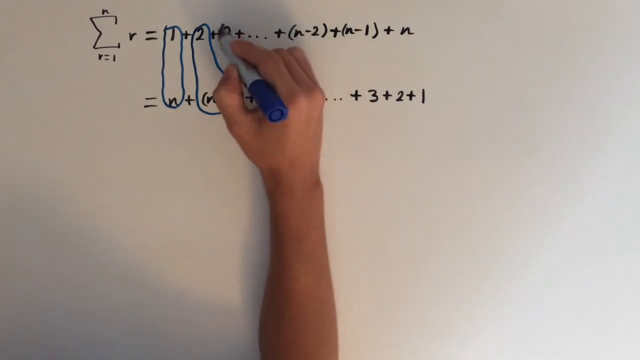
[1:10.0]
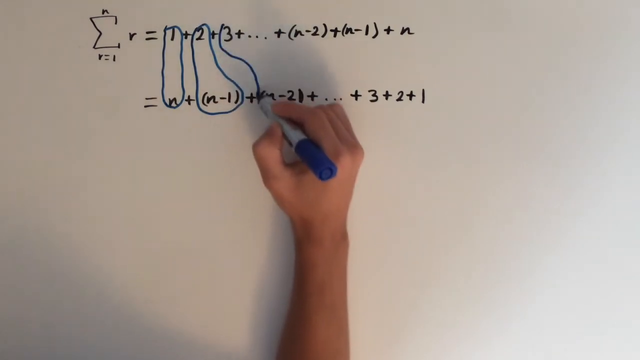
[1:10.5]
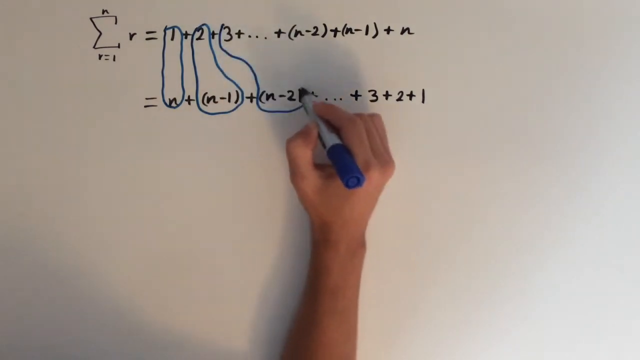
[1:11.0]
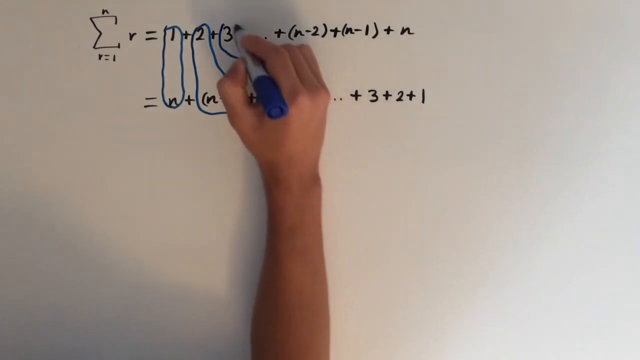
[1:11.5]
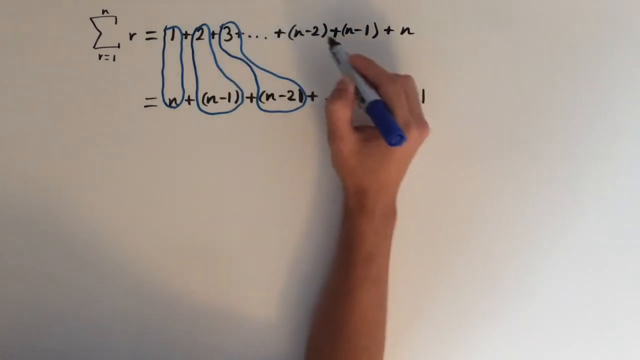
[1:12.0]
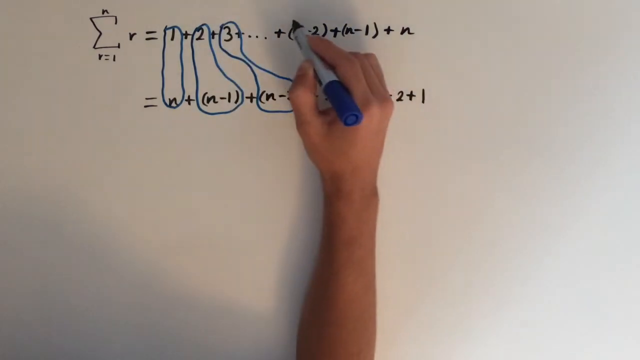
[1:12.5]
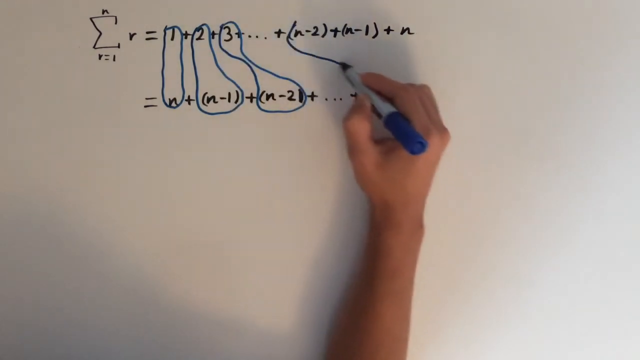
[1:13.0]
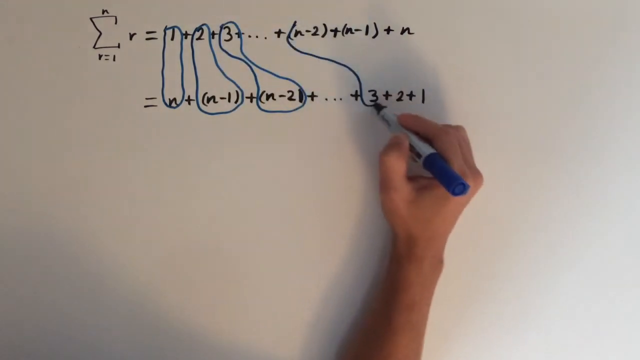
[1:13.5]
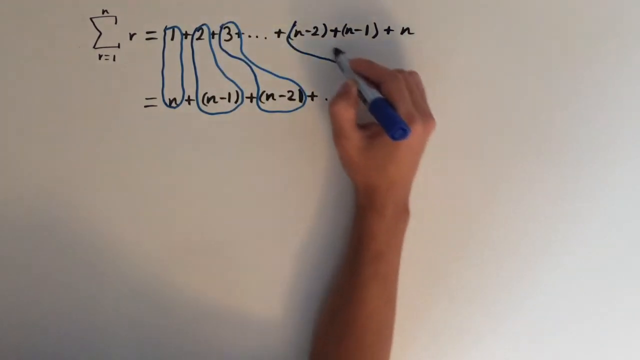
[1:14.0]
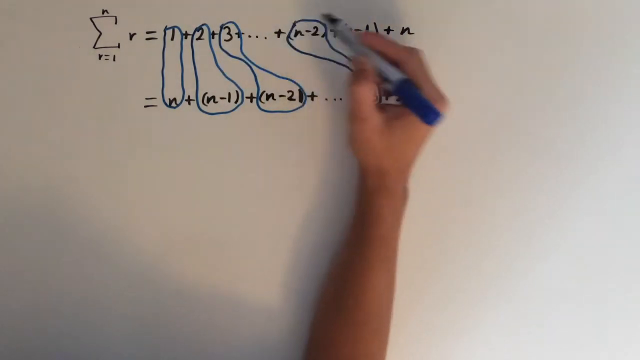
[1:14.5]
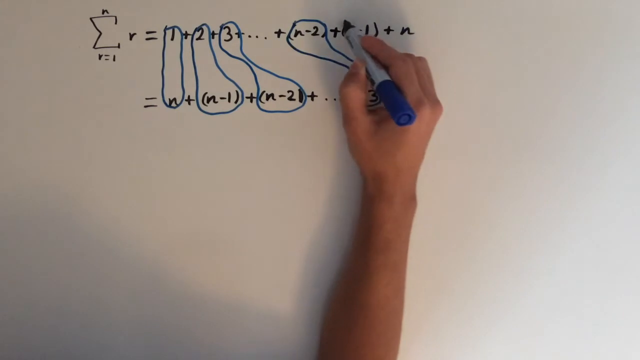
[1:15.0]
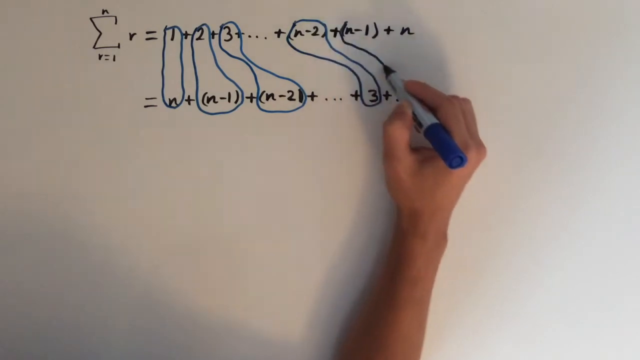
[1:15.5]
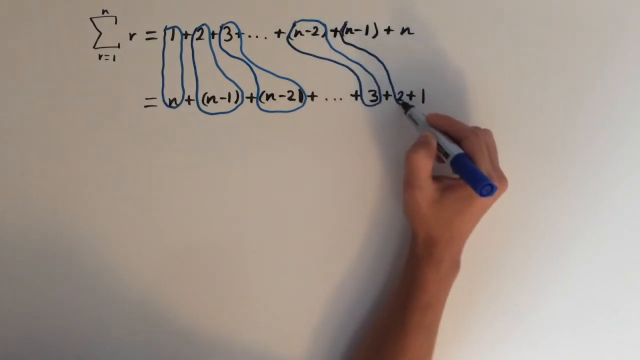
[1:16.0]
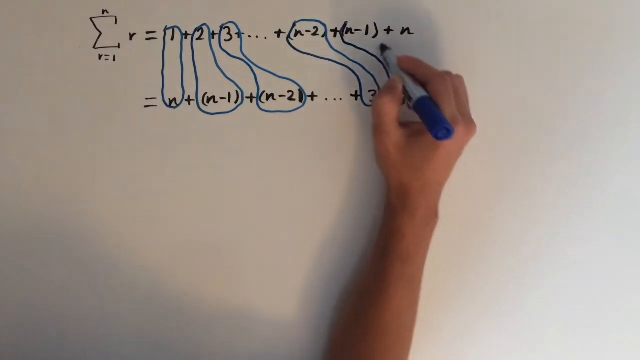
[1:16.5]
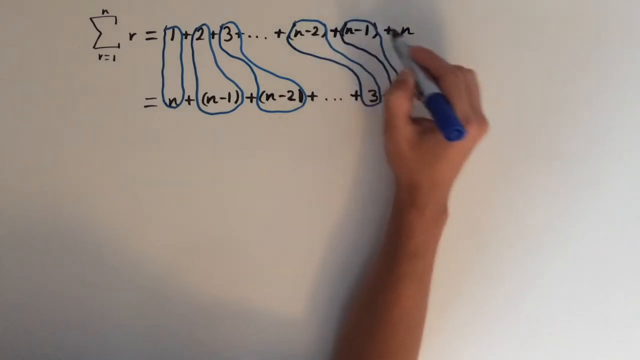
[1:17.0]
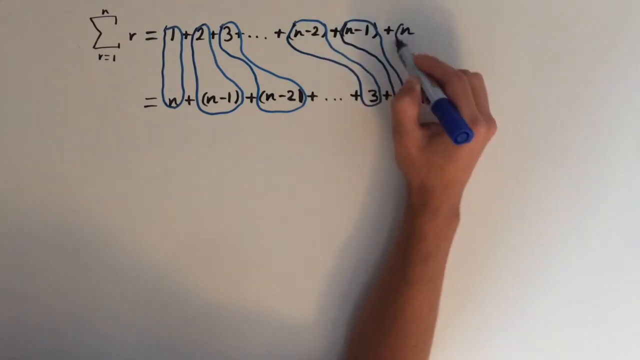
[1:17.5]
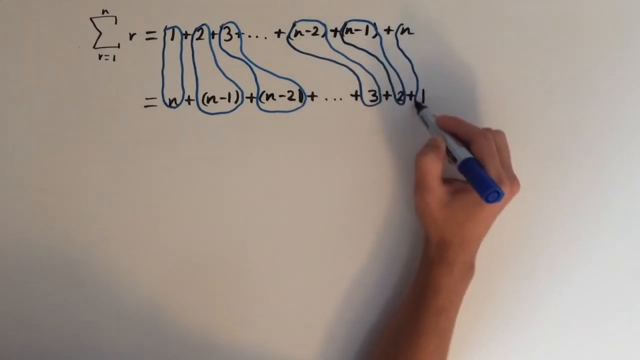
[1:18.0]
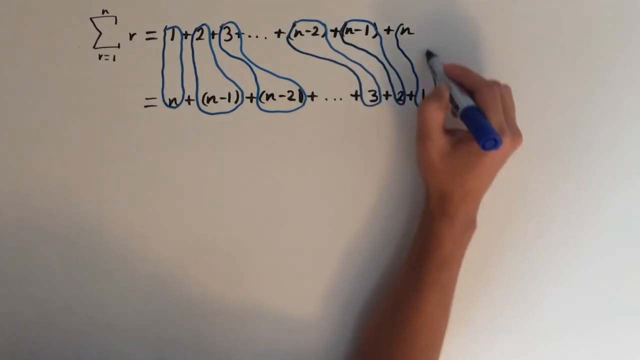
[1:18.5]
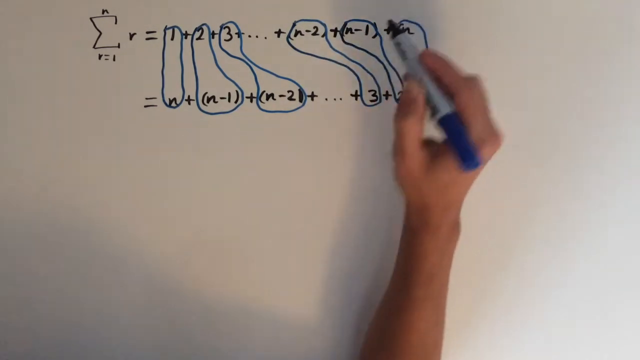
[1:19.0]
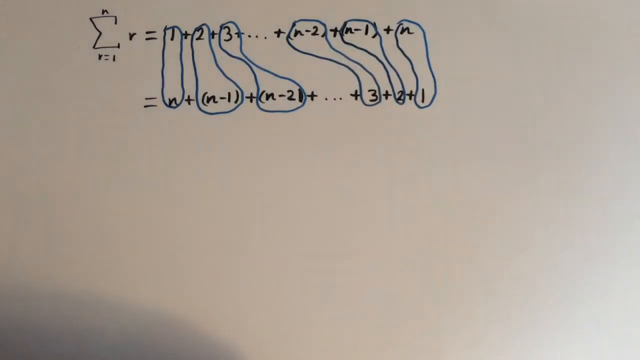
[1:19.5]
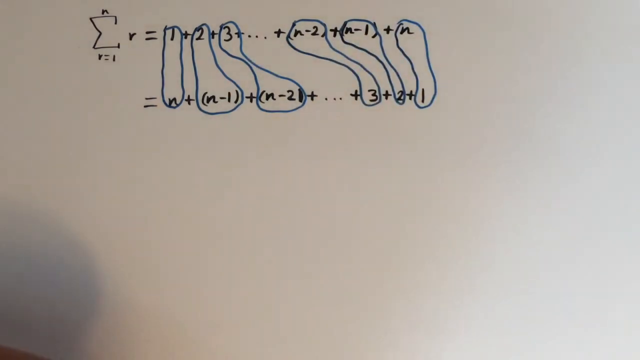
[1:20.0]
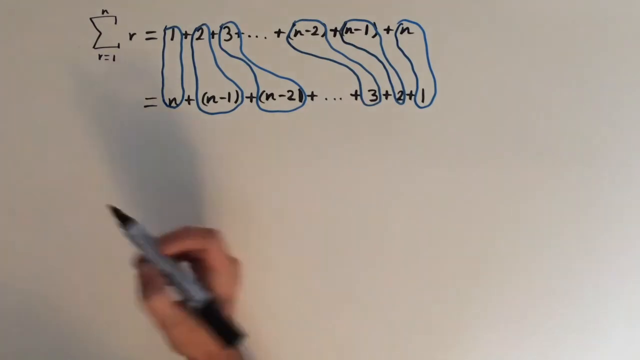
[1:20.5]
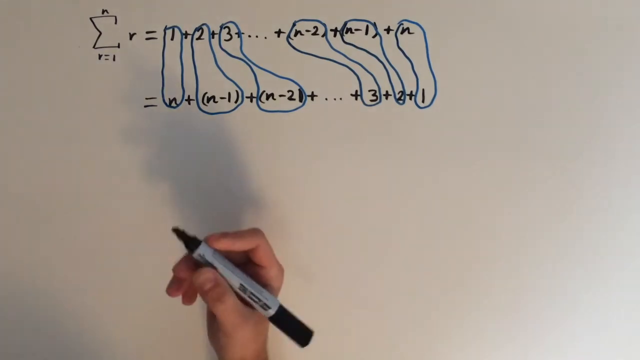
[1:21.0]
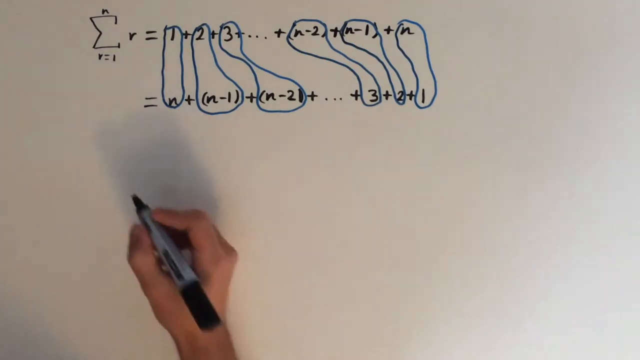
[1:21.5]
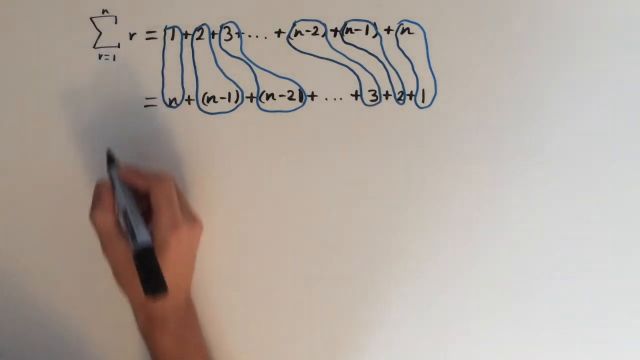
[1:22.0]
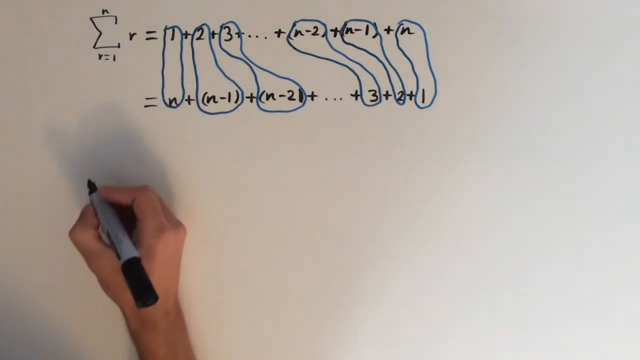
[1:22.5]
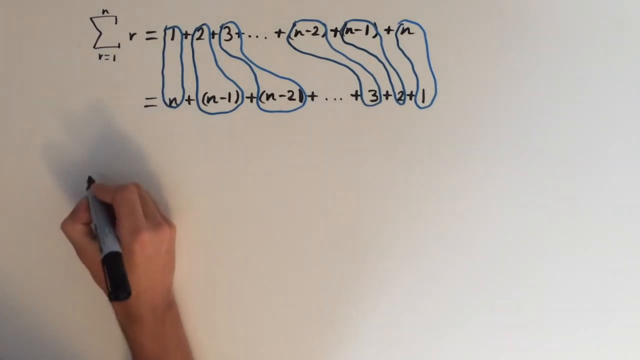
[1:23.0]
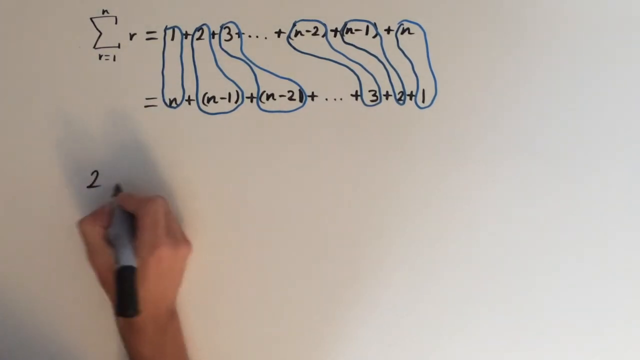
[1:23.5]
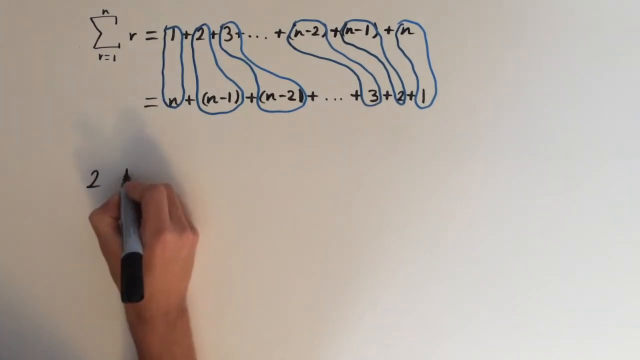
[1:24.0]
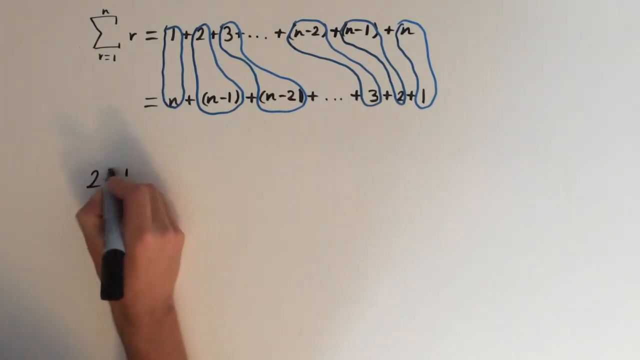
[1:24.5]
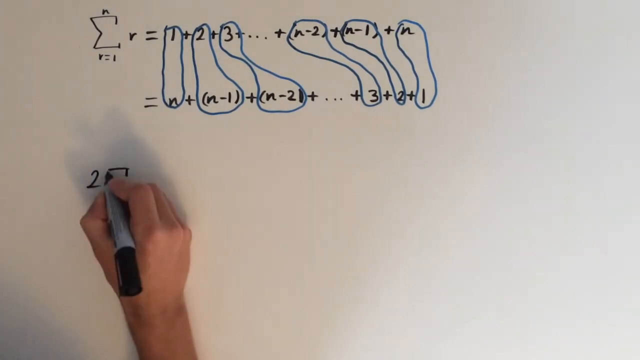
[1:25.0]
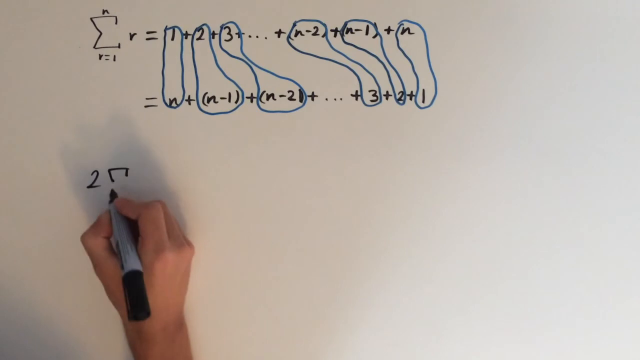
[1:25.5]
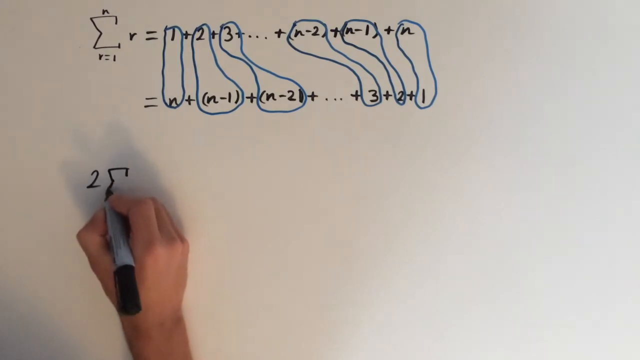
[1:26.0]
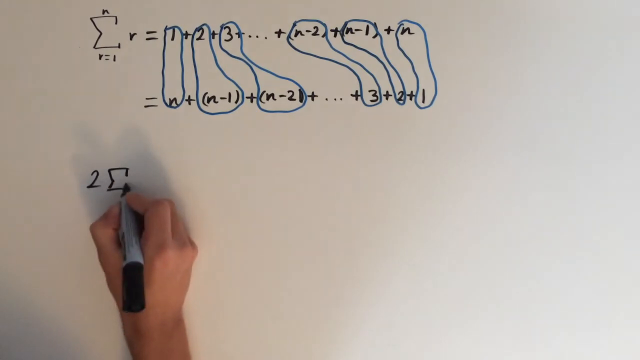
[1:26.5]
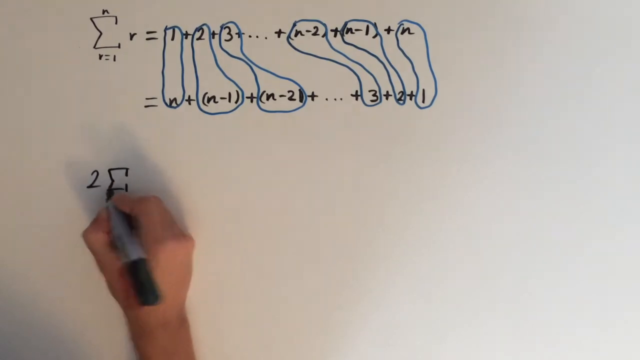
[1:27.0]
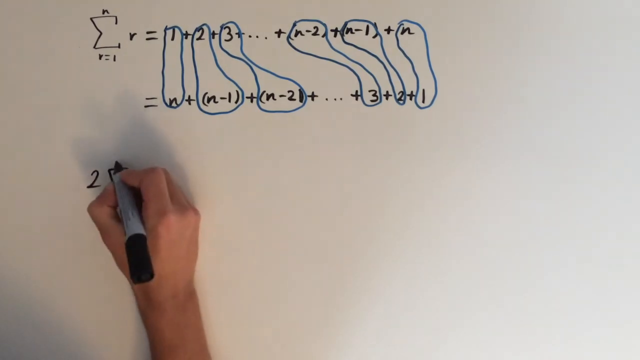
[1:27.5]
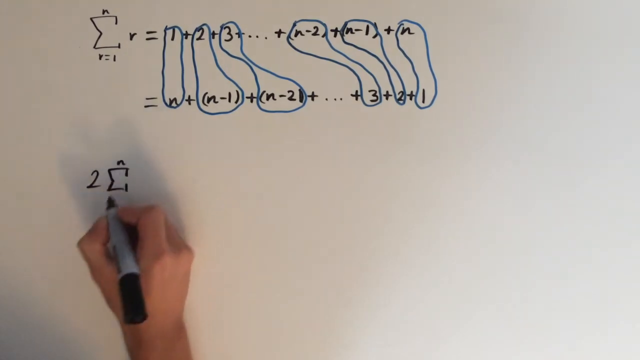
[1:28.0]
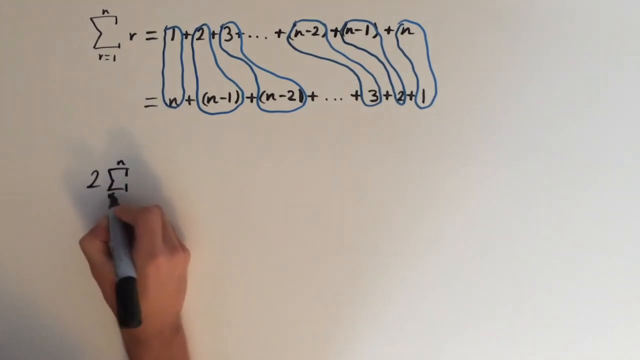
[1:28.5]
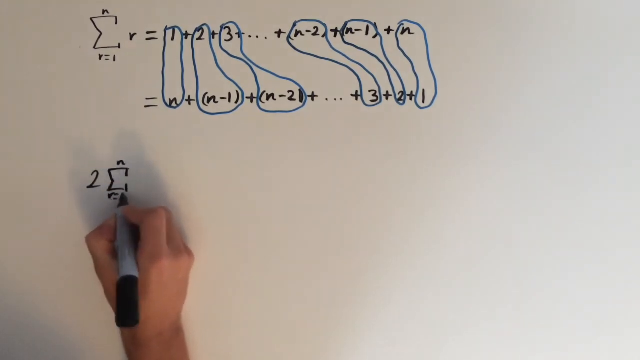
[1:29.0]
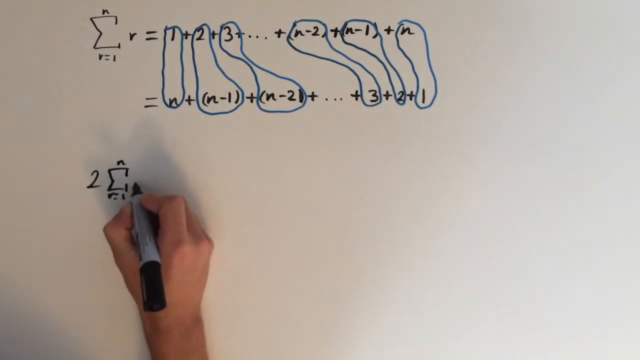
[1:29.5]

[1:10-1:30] The host shows how to rewrite the formula, apparently as 2 times the sum of r from r = 1 to n. The blue whiteboard marker is used for bubbling and circling parts of the equation, while the black marker is used to write the equations. There are two whiteboard markers, one black and one blue; both have silver or grey bodies, with the tip and lid matching the ink colour.